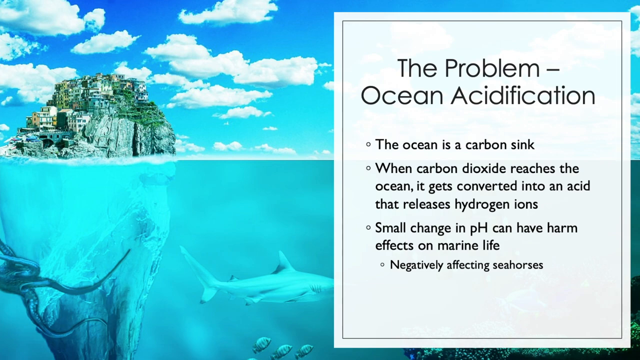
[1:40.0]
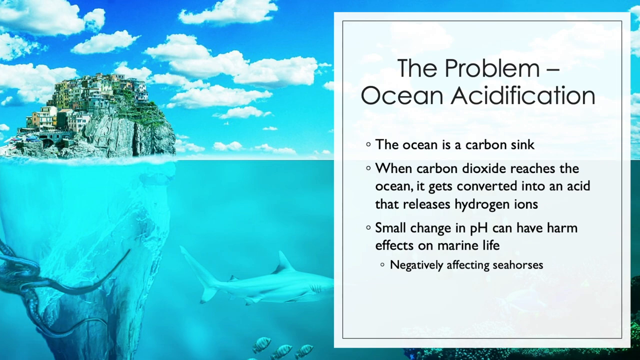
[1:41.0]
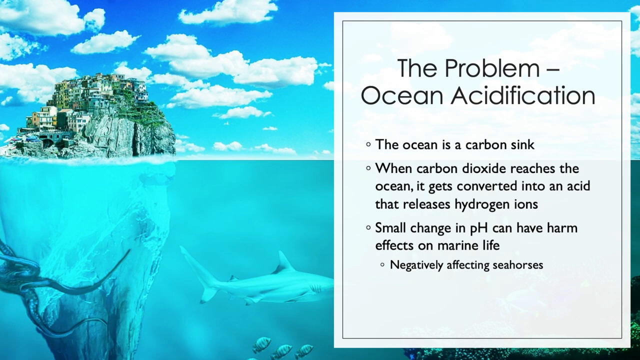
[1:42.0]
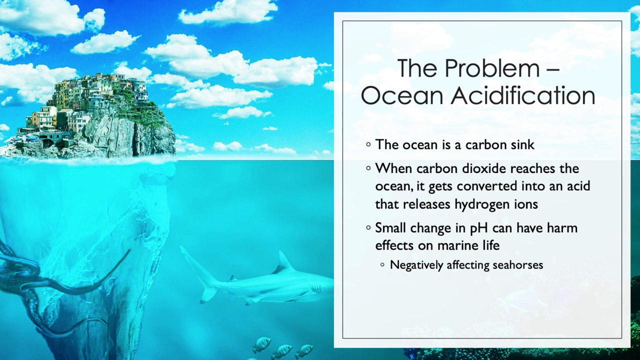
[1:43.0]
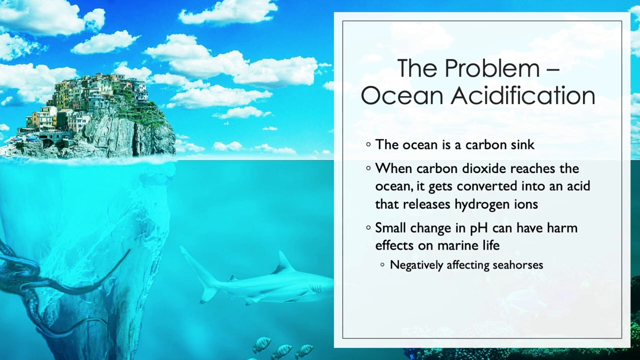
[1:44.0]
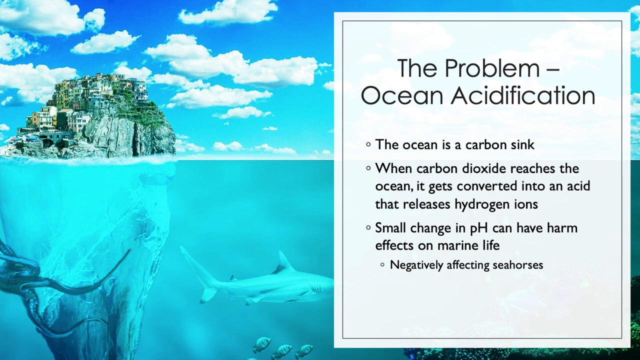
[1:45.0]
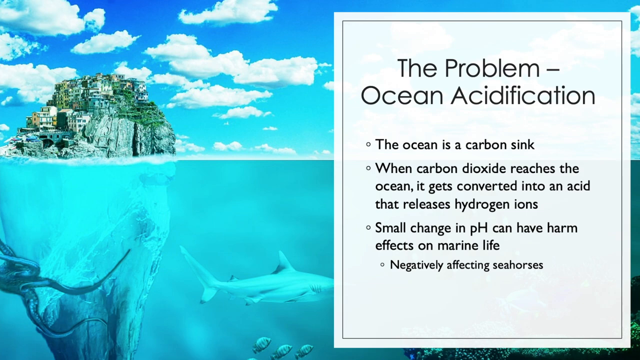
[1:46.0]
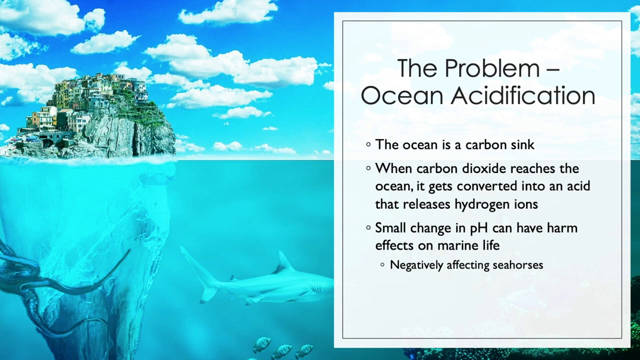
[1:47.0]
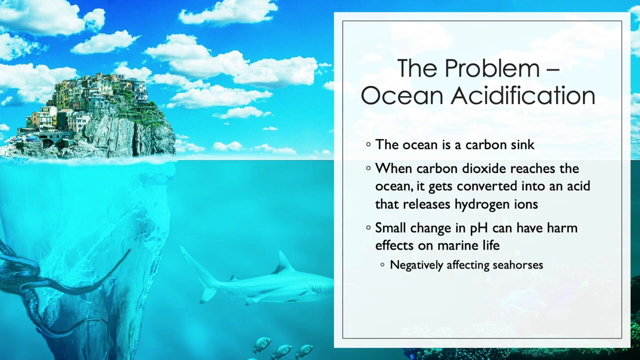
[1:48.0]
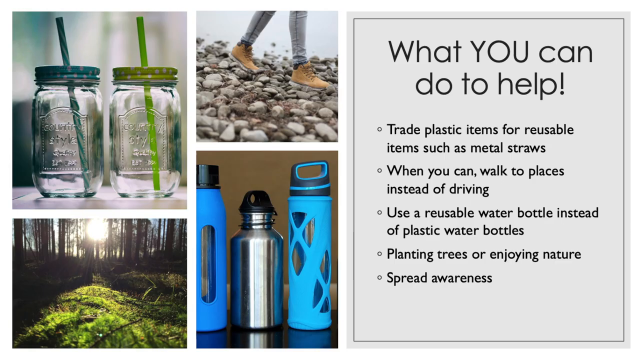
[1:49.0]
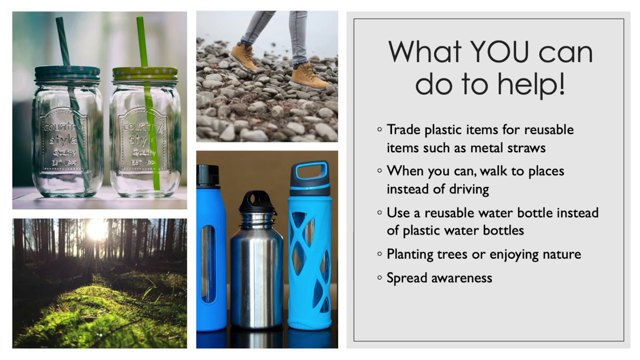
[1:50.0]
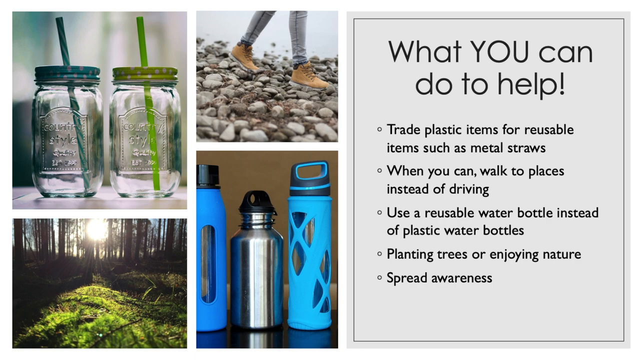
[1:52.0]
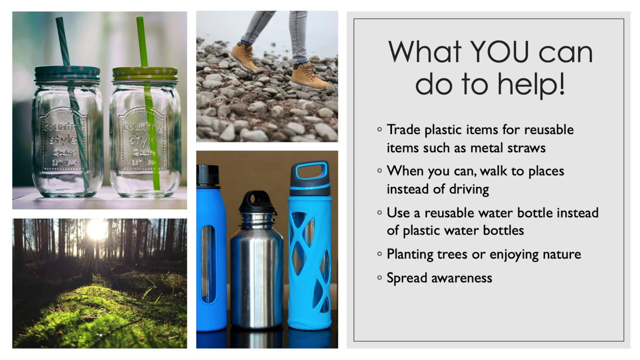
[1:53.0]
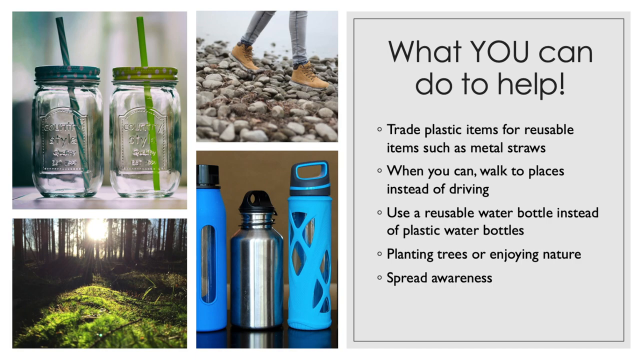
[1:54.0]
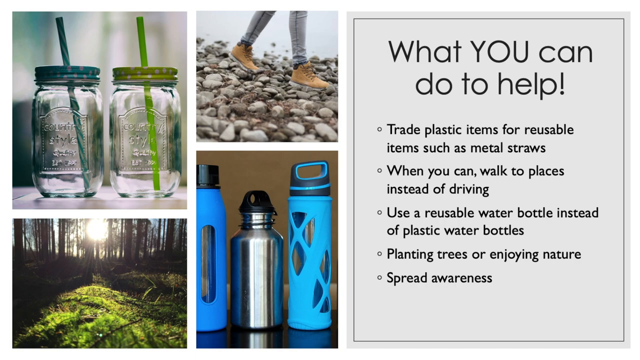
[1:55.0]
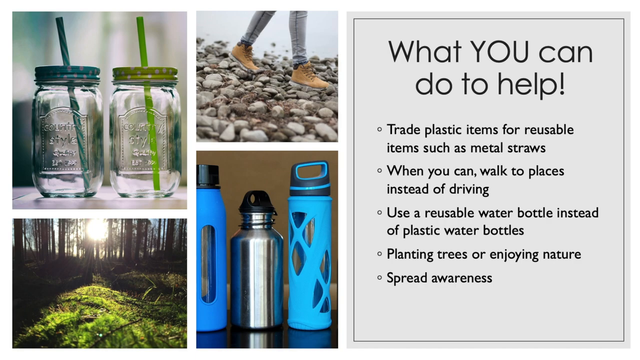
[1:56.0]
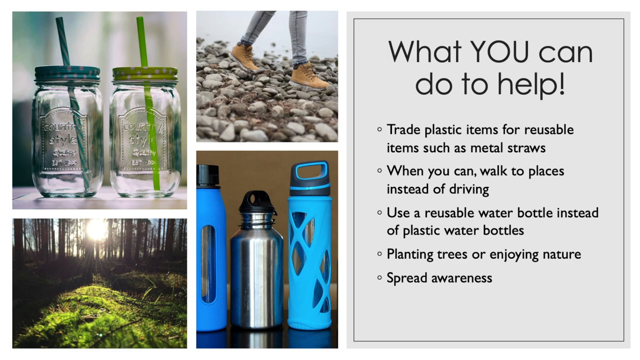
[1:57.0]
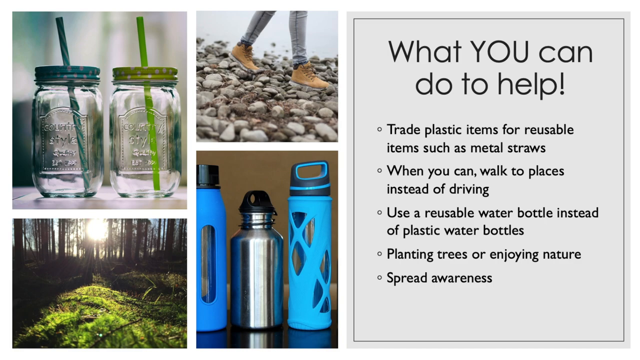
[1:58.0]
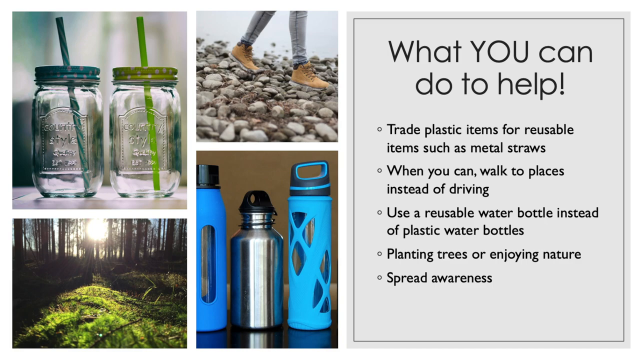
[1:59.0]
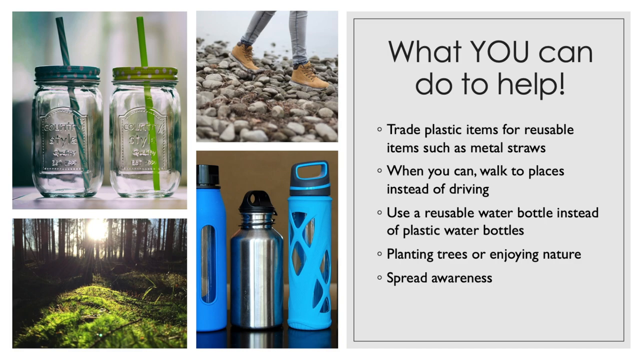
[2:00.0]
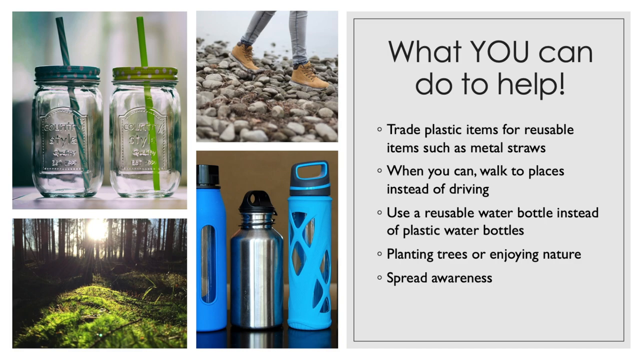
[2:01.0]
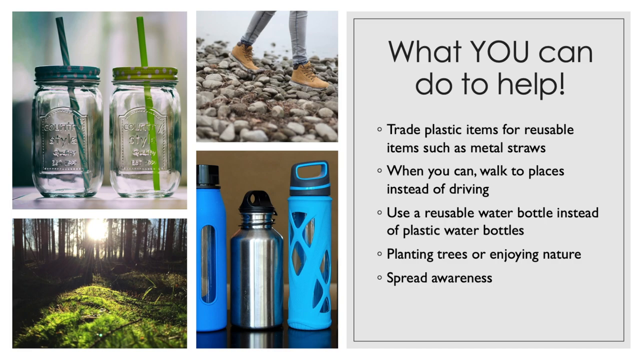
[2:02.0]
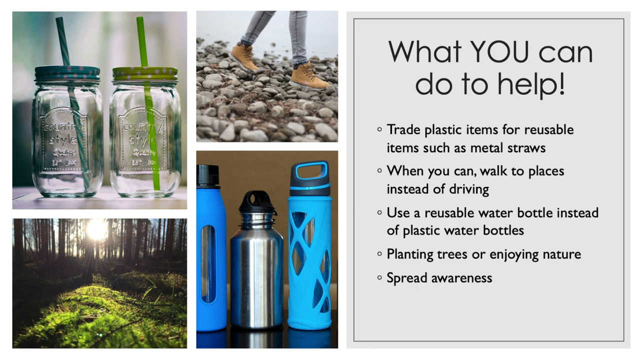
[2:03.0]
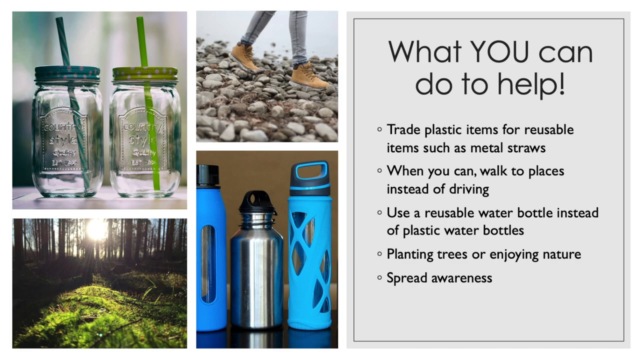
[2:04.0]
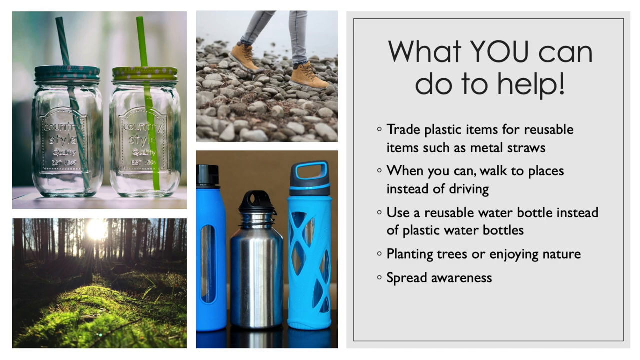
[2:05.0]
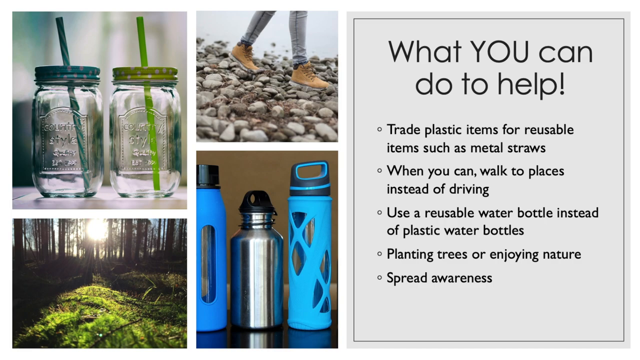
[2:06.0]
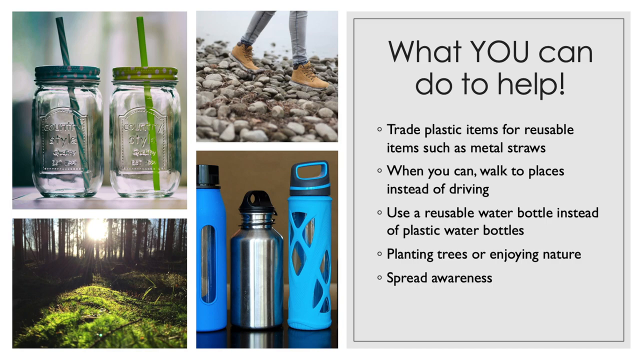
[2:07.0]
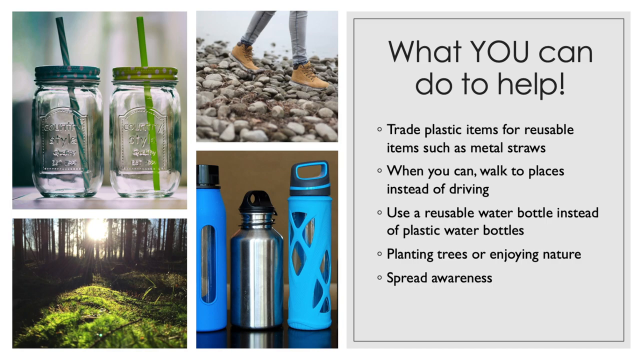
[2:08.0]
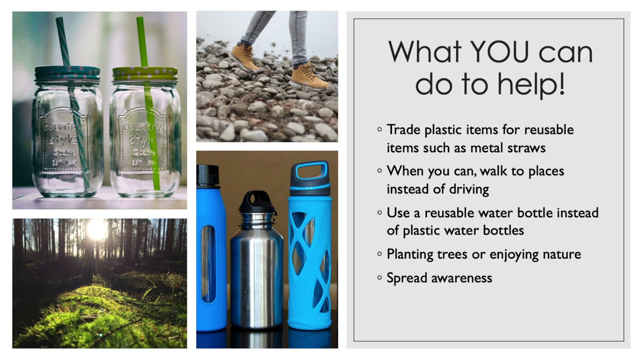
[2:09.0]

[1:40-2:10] Four images of varying shapes and sizes fill the next slide: the bottom left and top right are smaller, and the top left and bottom right are bigger rectangles. Going clockwise, one shows a reusable glass mason jar with straws; to its right, a person in beige boots walks on some rocks; another shows three reusable water bottles, a metal one in the middle and two blue plastic ones on either side; and the last shows a forest with the sun shining through the trees. On the right is a grey box with a dark grey border containing the text "what you can do to help", with the U in all caps, followed by five bullets in smaller black text: "trade plastic items for reusable items", "when you can, walk to places instead of driving", "use a reusable water bottle instead of plastic", a fourth beginning "plant trees", and "spread awareness". This slide remains for the rest of the segment.